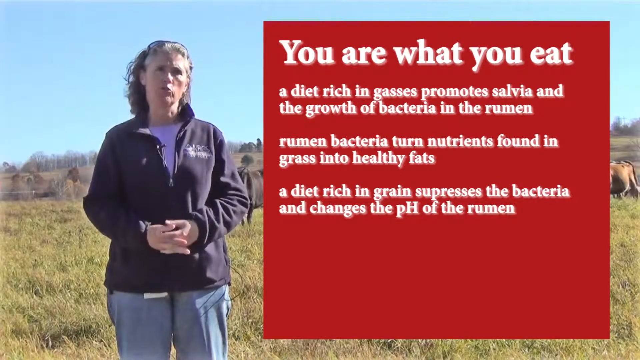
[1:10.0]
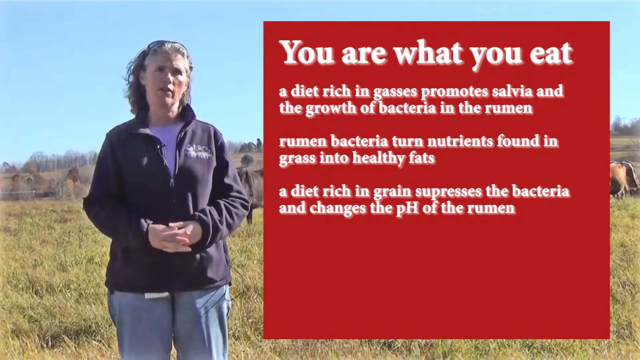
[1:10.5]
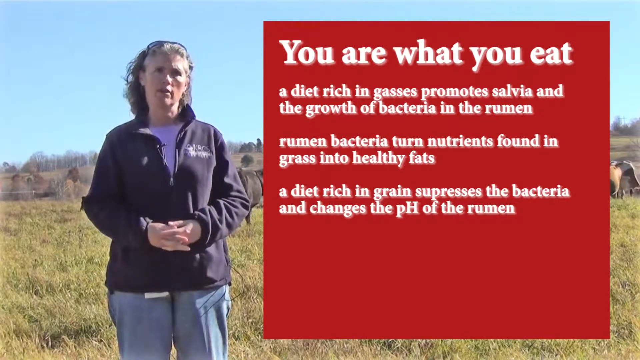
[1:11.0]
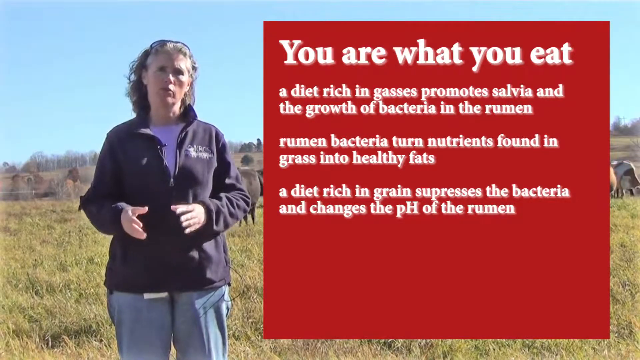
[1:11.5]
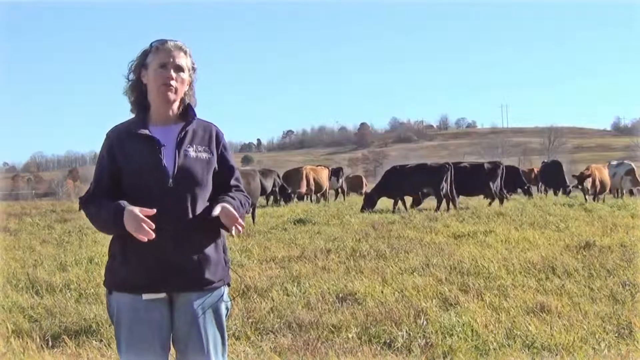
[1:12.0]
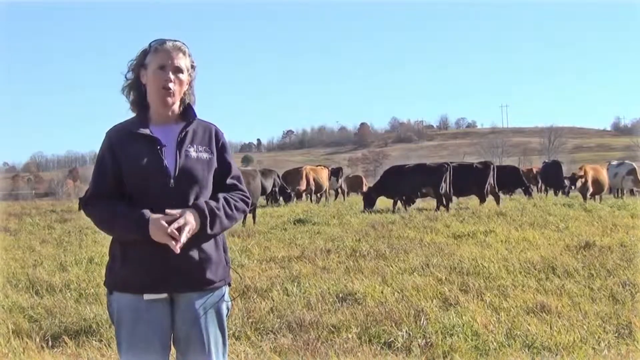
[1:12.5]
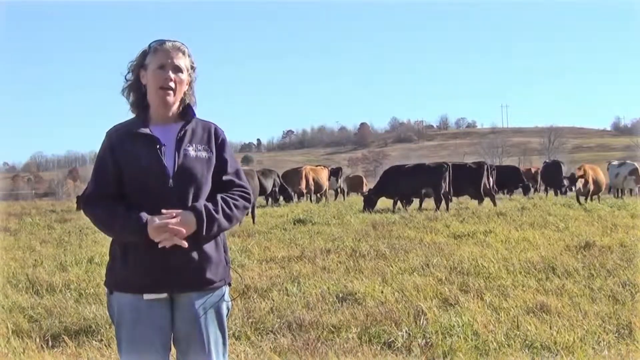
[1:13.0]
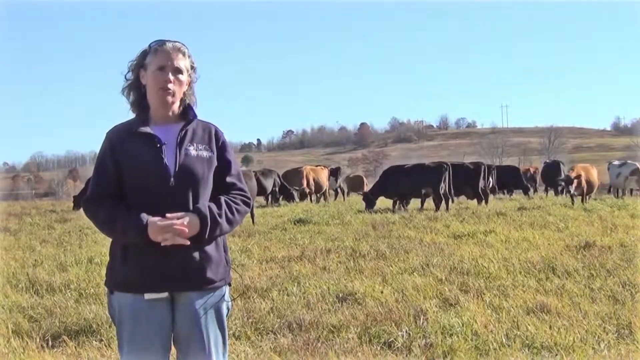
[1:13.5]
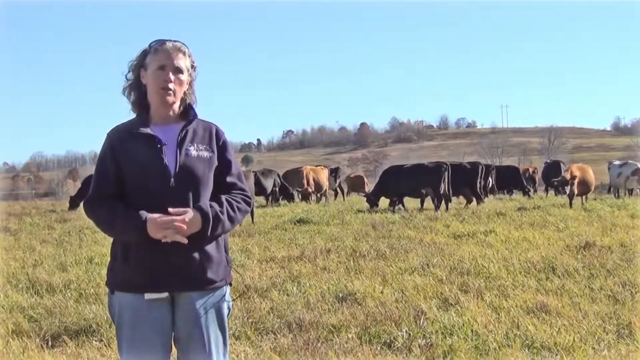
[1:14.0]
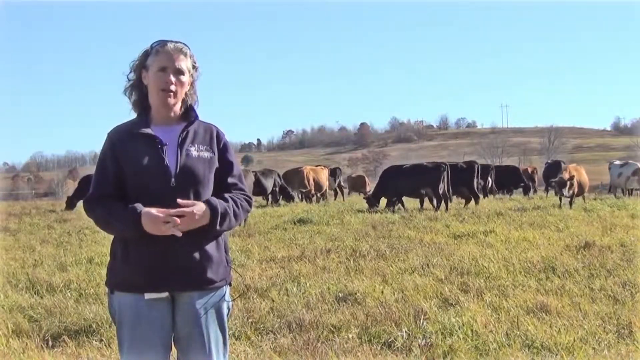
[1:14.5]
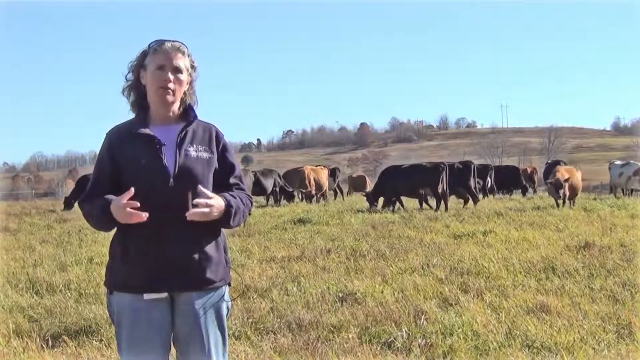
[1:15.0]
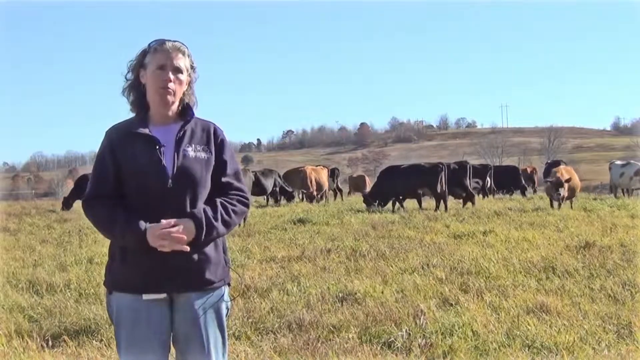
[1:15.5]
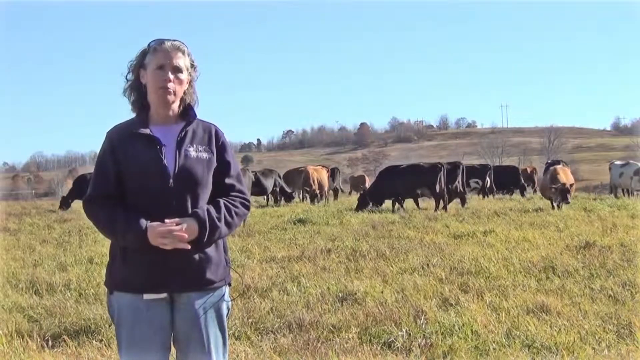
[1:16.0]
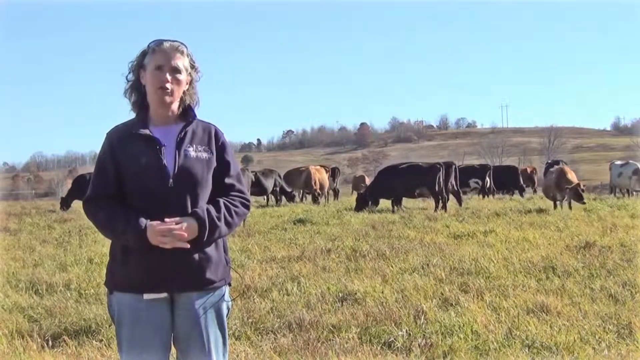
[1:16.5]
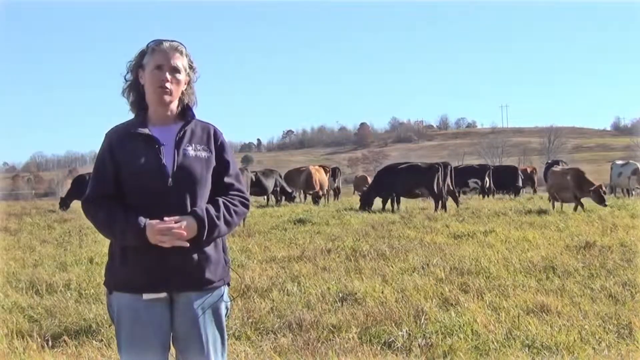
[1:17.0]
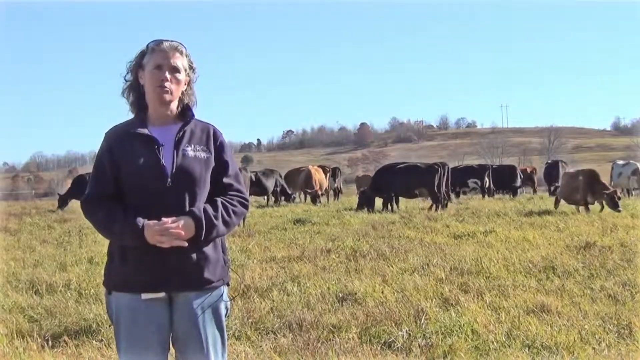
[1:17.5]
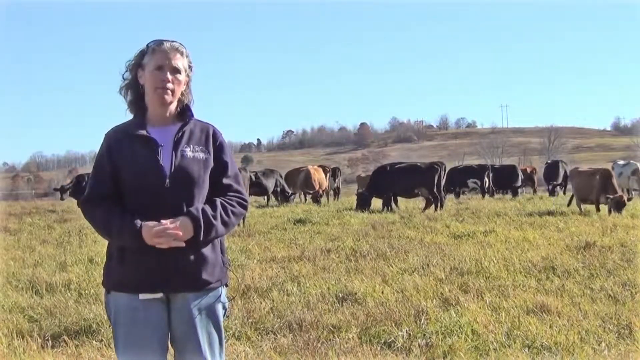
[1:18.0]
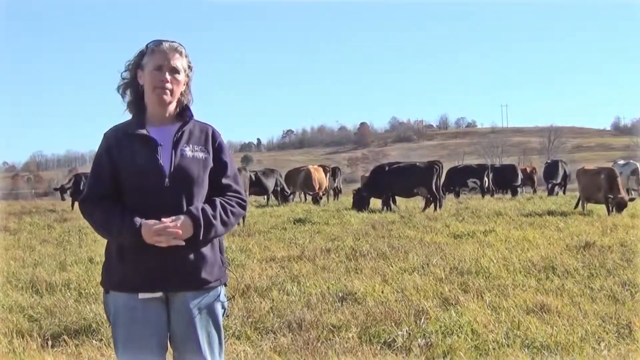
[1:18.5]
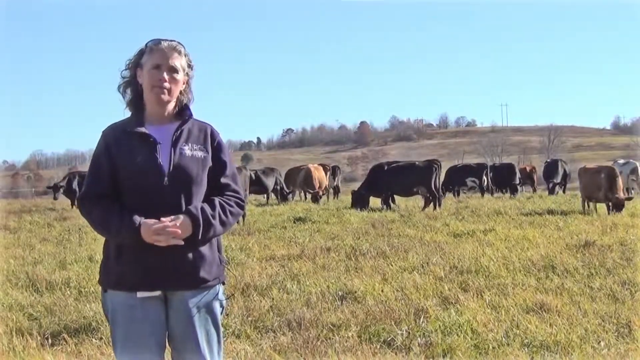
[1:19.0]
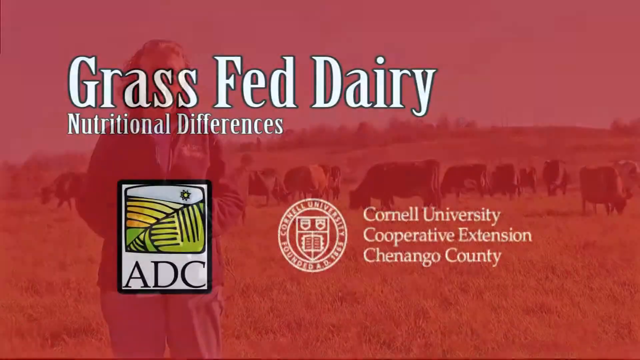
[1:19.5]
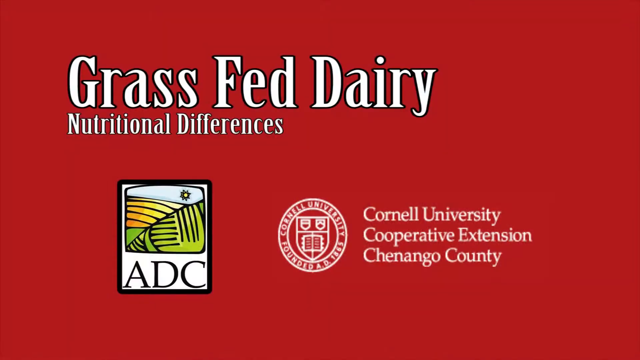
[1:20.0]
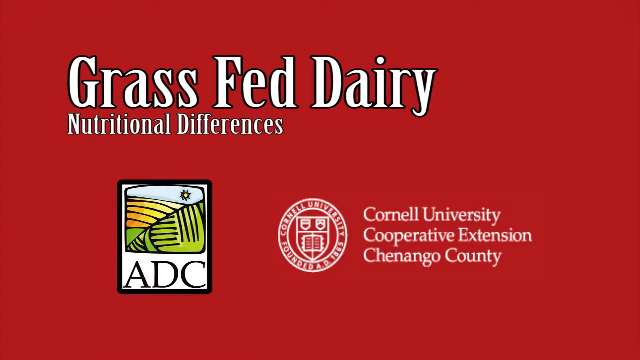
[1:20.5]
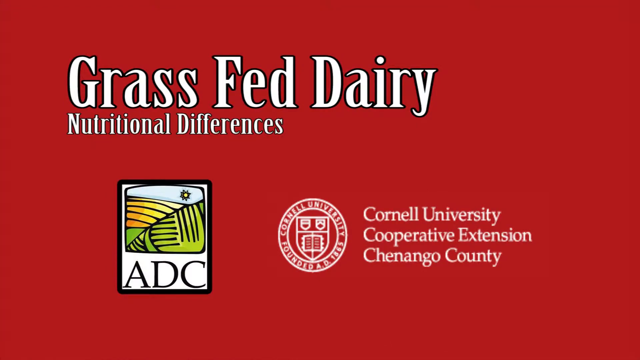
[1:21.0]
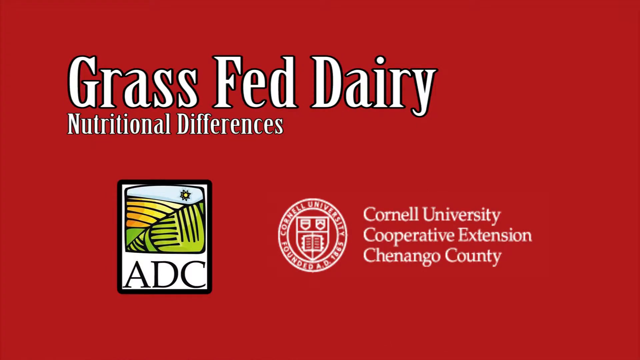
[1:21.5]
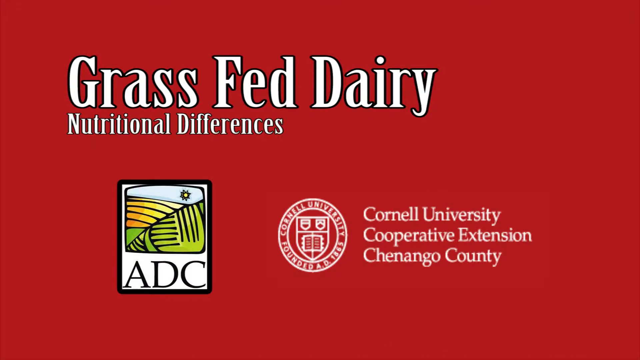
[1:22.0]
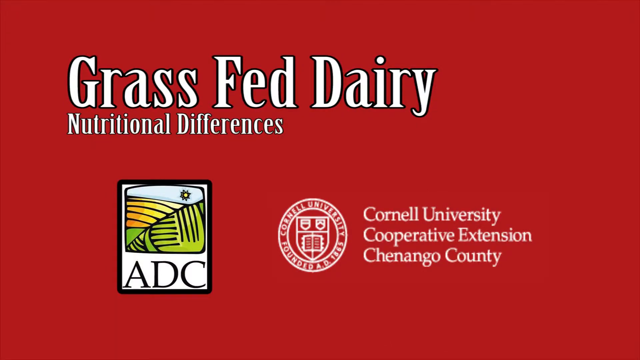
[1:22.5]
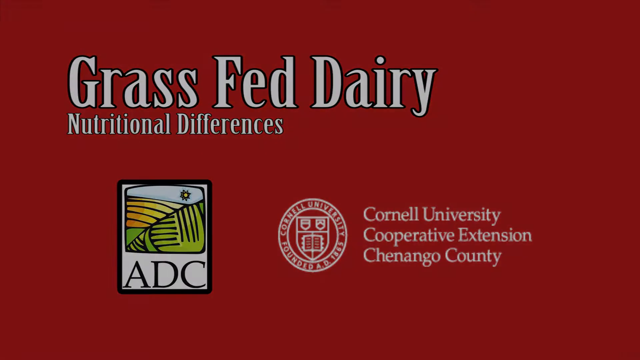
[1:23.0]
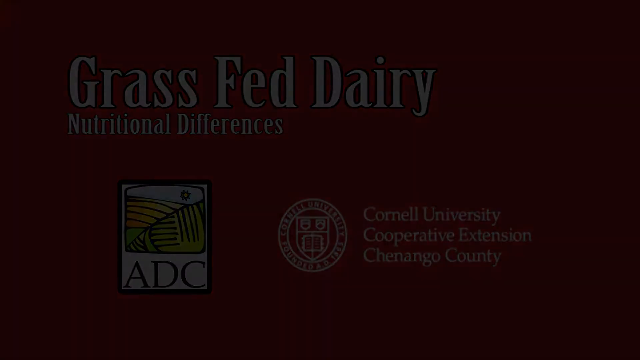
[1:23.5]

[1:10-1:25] The woman, wearing a black jacket, stands outside on a field or pasture with grazing cows behind her. Notes appear beside her listing ingredients that can be added to an animal's diet to benefit its health: omega-3 and CLA, a fatty acid that can help control disorders such as heart disease and some cancers. Other notes cover what to eat, saying some ingredients help bacteria turn nutrients found in grass into healthy fats, while another diet suppresses the bacteria and changes the pH of the rumen.